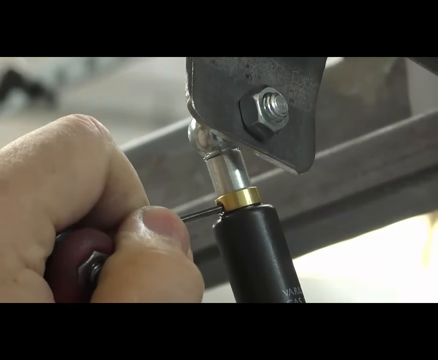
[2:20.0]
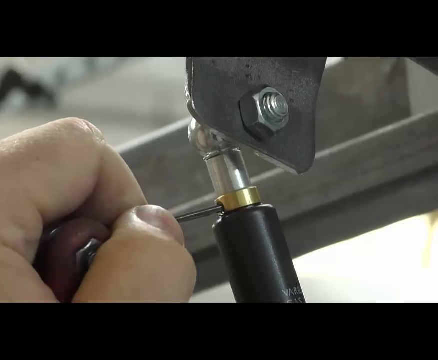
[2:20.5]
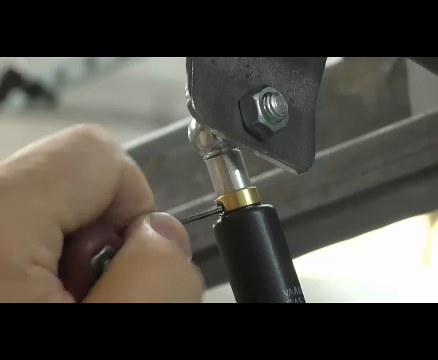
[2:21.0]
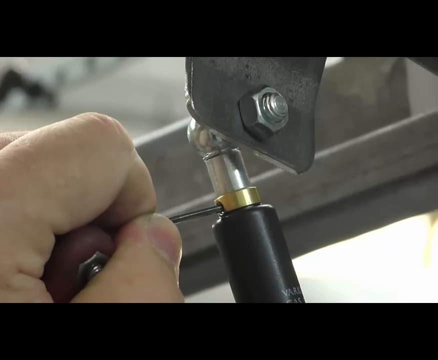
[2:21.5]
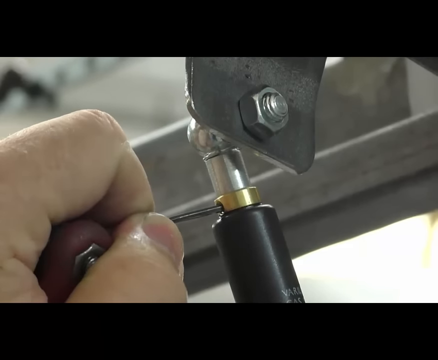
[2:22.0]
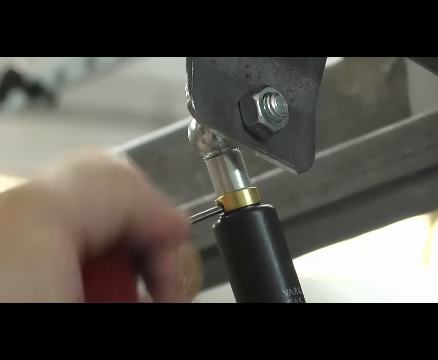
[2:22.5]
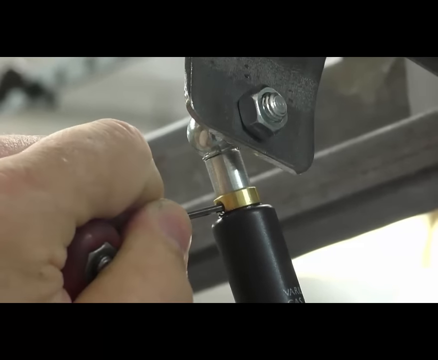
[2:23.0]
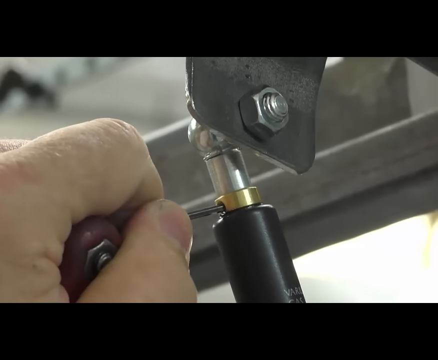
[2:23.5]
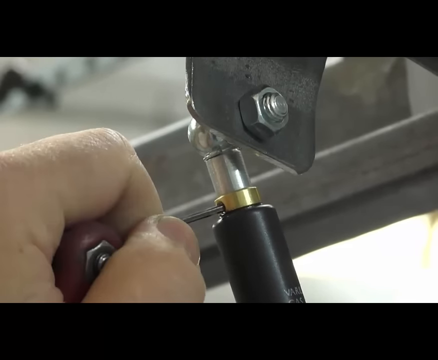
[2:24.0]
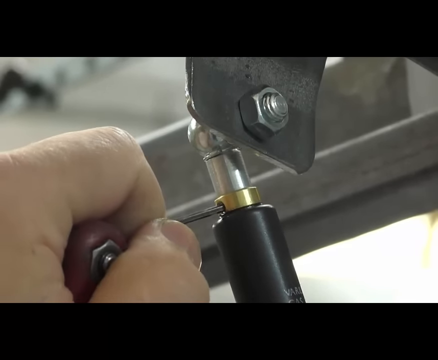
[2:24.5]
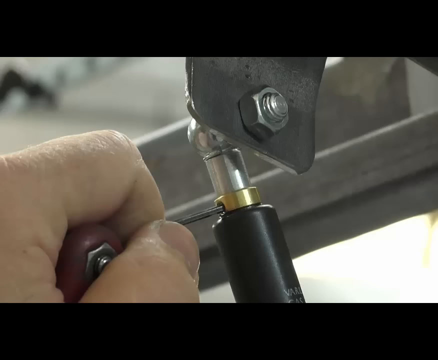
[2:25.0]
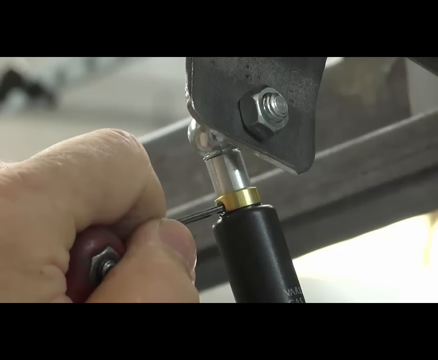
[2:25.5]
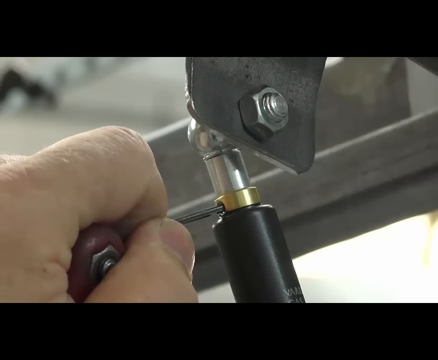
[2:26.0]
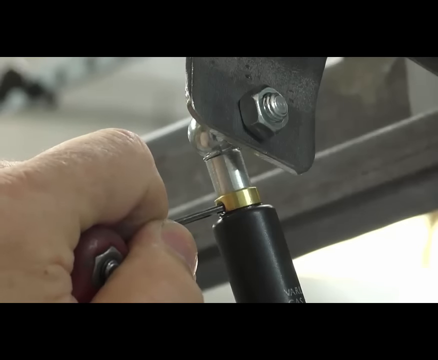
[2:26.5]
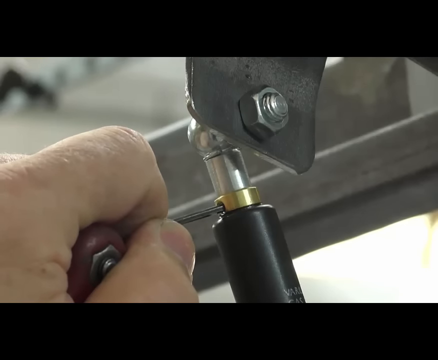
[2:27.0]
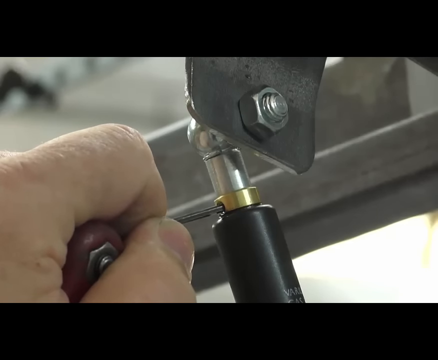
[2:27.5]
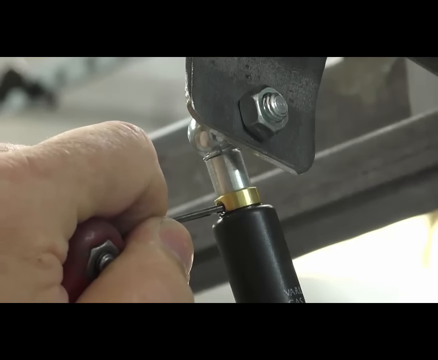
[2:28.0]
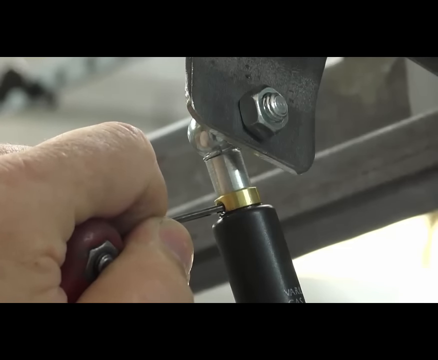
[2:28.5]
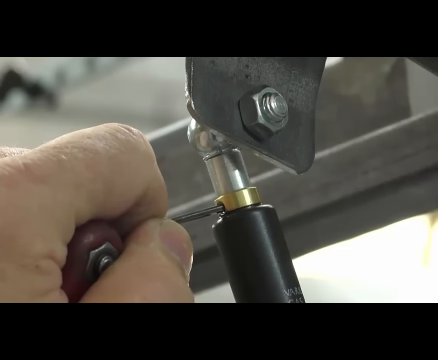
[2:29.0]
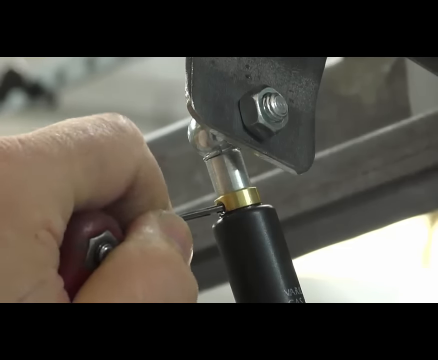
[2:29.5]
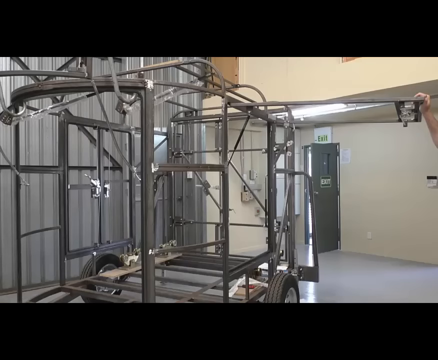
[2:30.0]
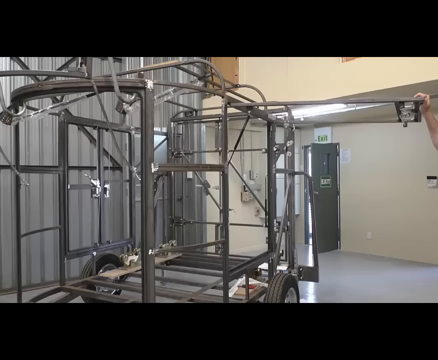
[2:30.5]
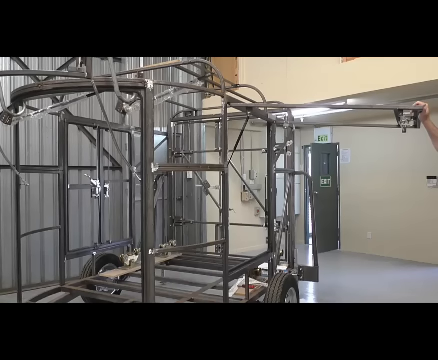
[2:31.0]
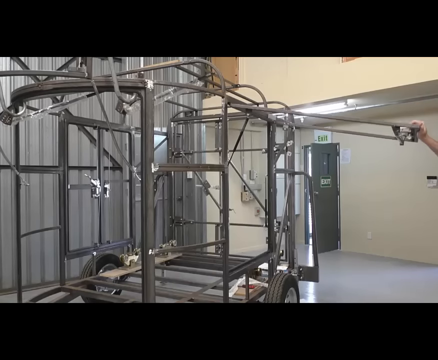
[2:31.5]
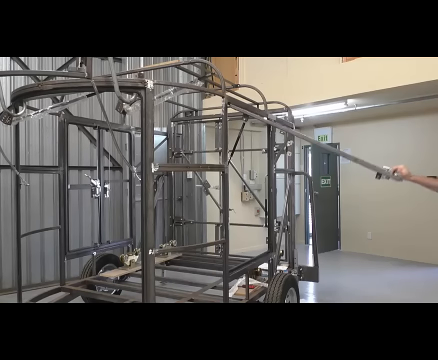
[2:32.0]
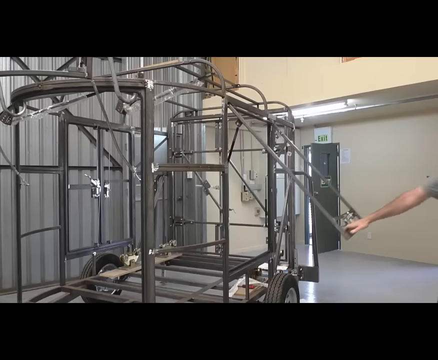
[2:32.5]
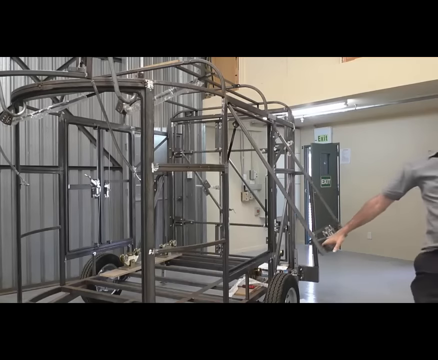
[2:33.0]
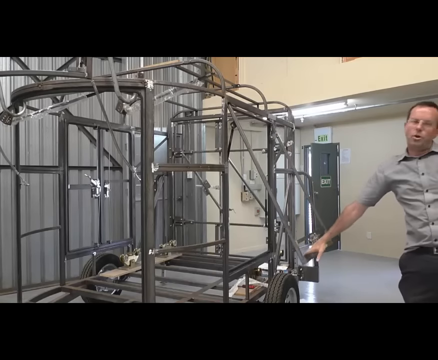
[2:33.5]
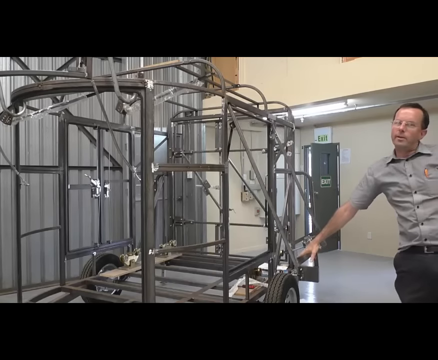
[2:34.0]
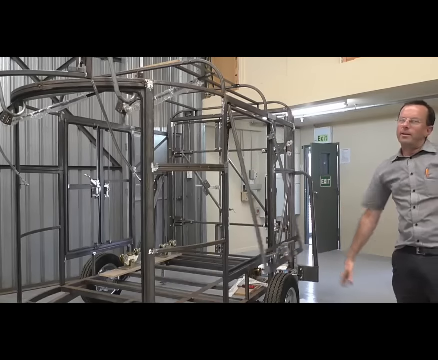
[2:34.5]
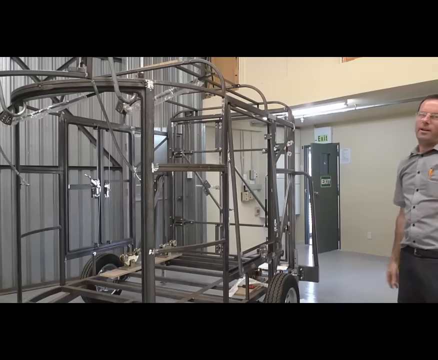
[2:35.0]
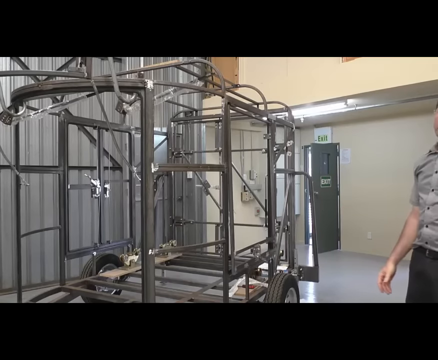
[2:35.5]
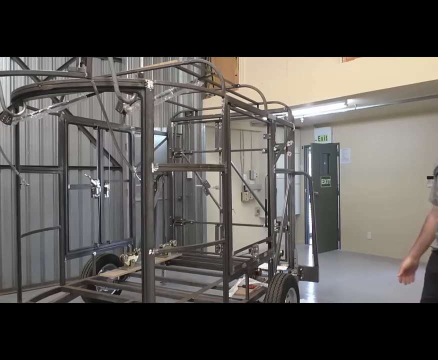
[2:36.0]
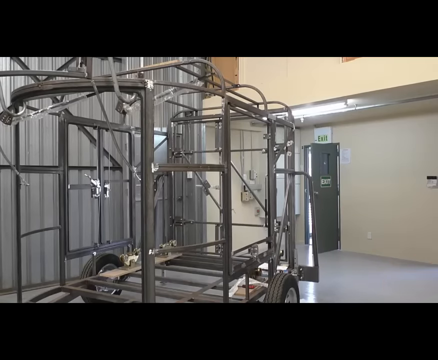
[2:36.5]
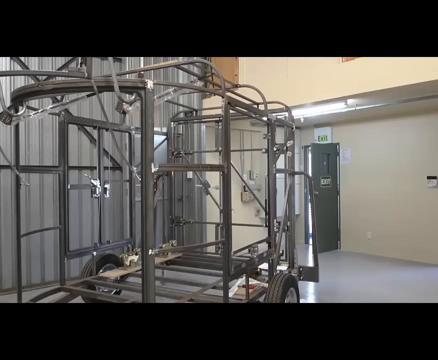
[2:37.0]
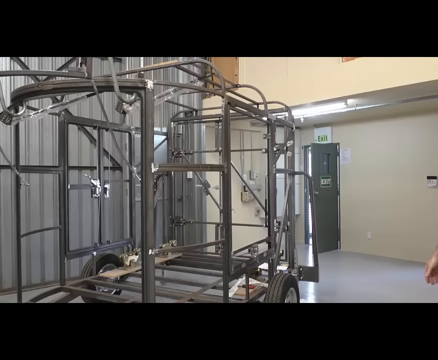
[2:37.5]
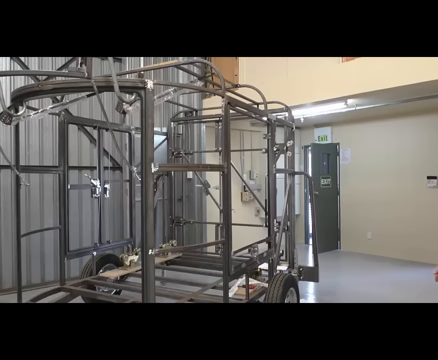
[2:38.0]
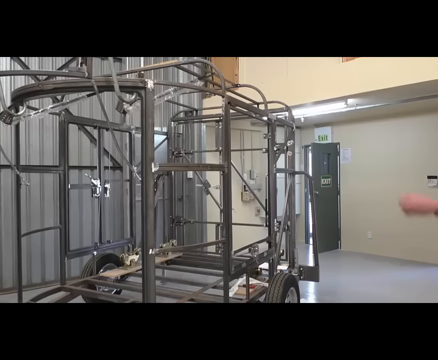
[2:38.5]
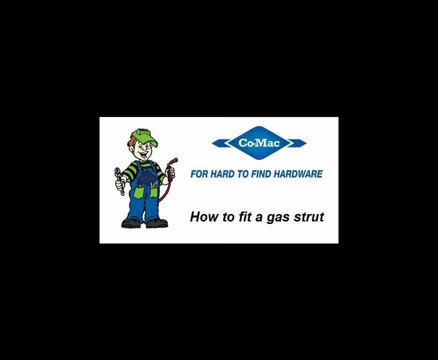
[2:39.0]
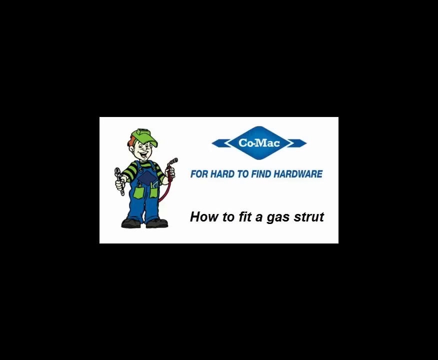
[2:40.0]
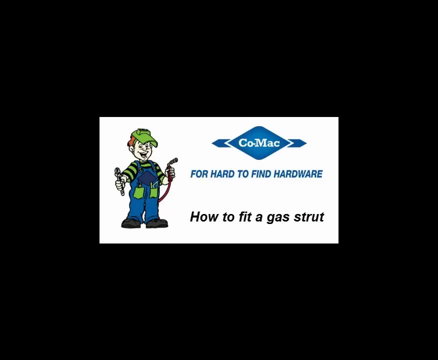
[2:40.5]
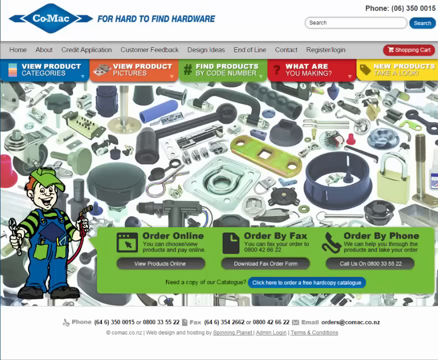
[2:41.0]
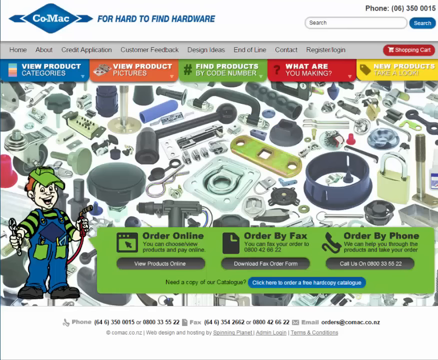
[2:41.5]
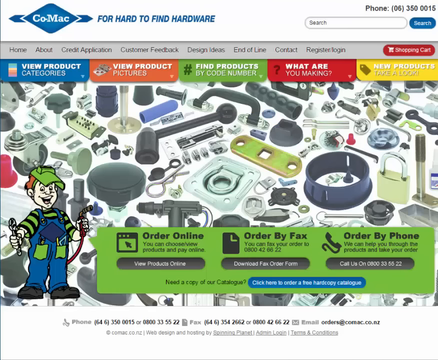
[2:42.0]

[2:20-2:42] A close-up shows a metal piece sticking through a round brass piece with a hole in it; the man appears to be making sure the hole goes all the way through. He stands off to the side and kind of looks at the camera. The Comac logo appears, and the website shows all kinds of gadgets; the little animated character at the end kind of laughs a bit. The website shows how to find the diagram, with "gas struts adjustable pressure" and a big arrow pointing down to it. It then points to the man, who wears a uniform-type shirt and pants, holds a measuring tape, has dark brown hair, and is probably about 45 years old. The setting is a warehouse.